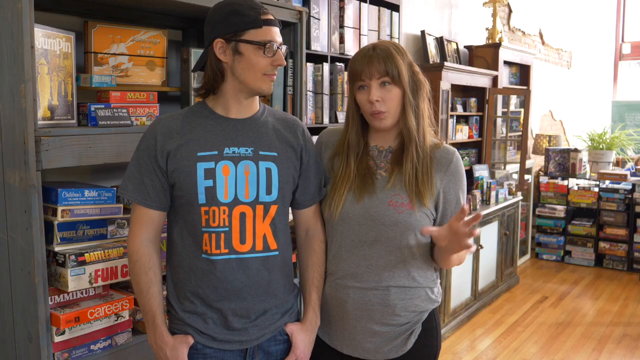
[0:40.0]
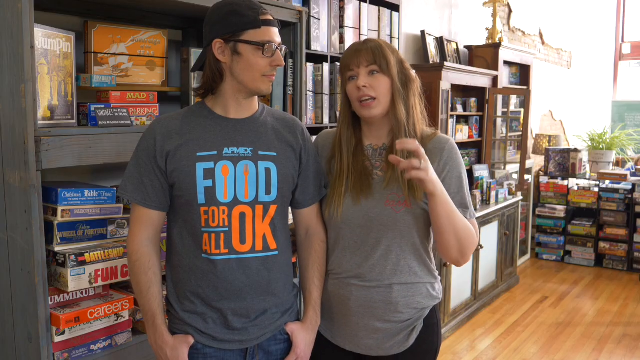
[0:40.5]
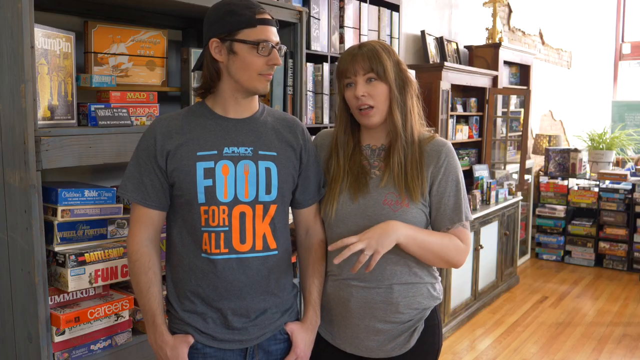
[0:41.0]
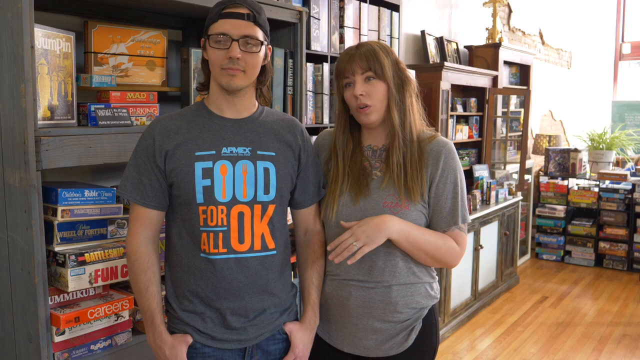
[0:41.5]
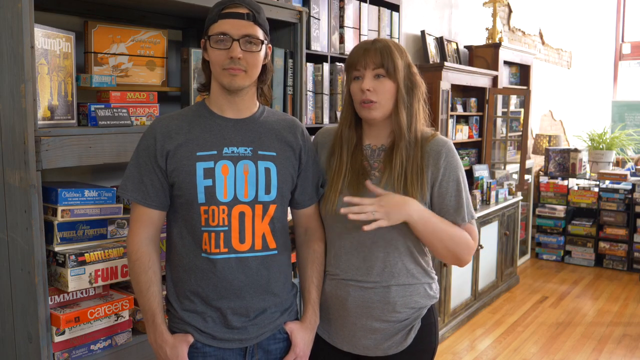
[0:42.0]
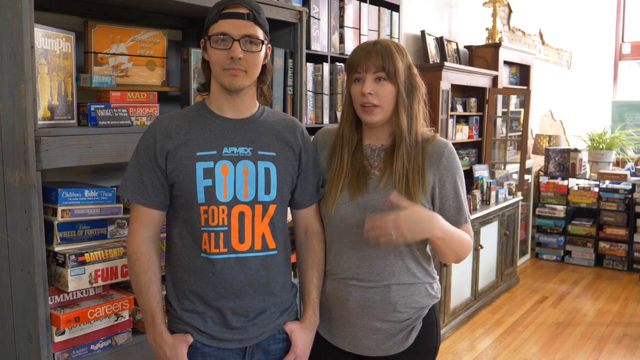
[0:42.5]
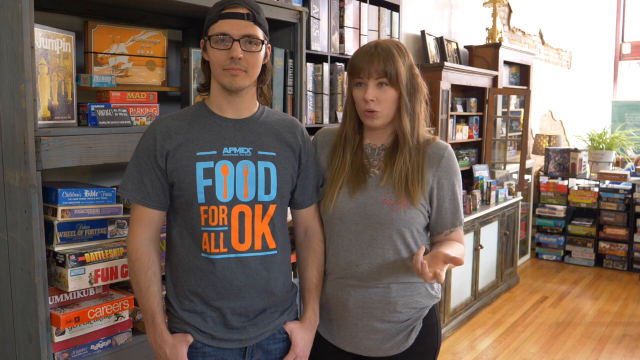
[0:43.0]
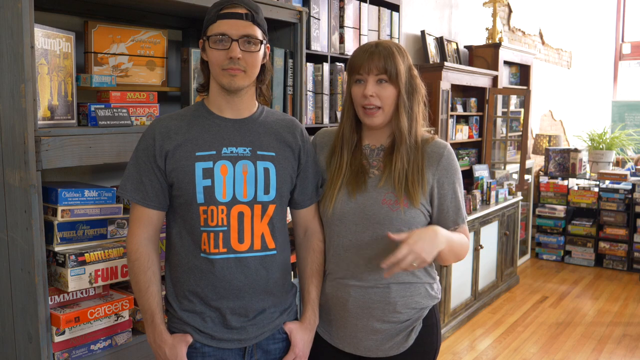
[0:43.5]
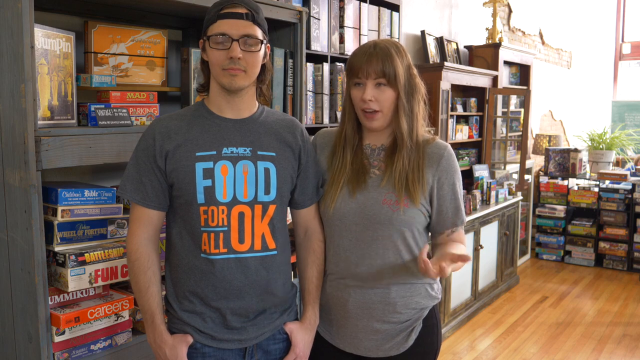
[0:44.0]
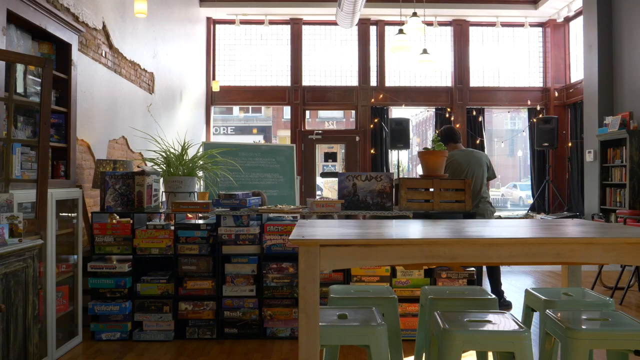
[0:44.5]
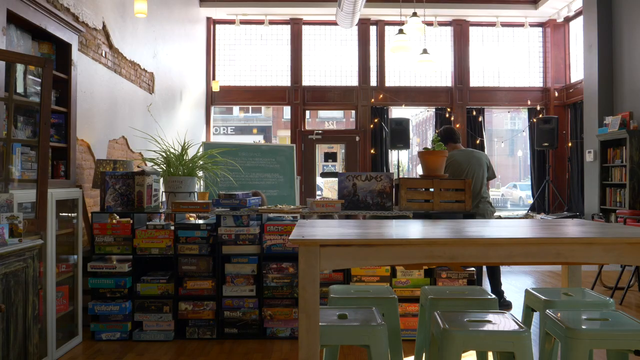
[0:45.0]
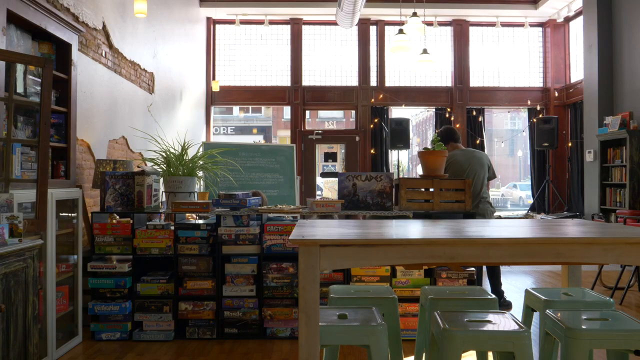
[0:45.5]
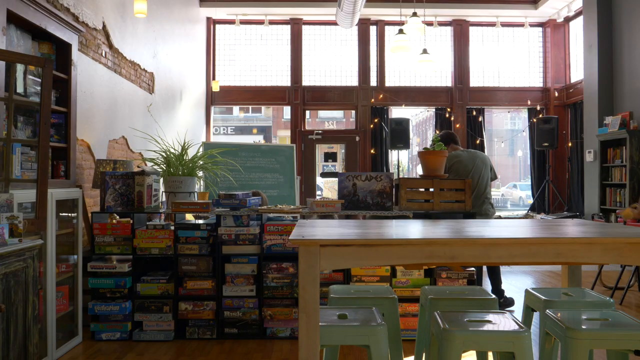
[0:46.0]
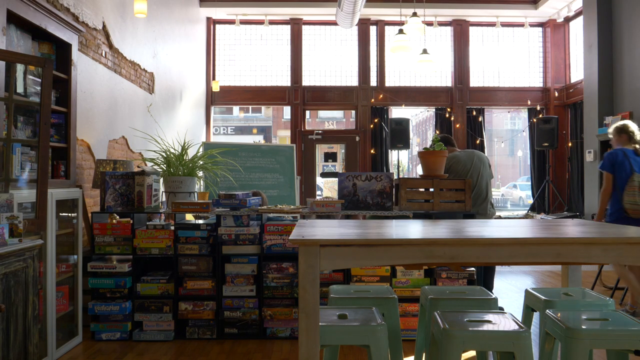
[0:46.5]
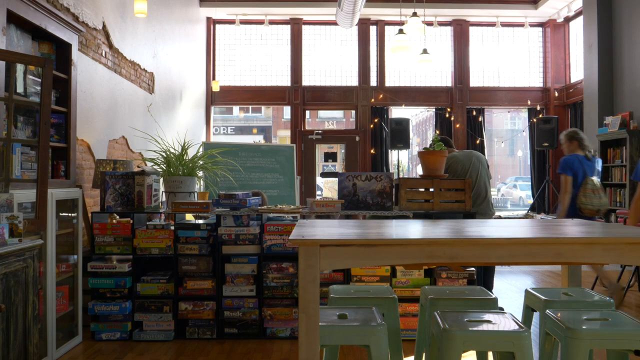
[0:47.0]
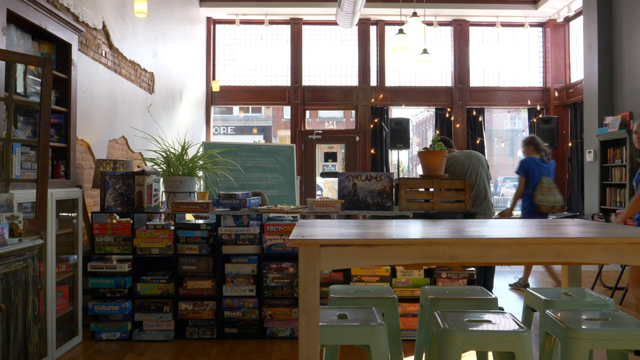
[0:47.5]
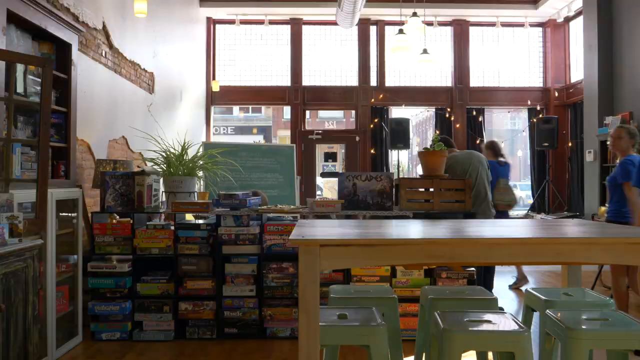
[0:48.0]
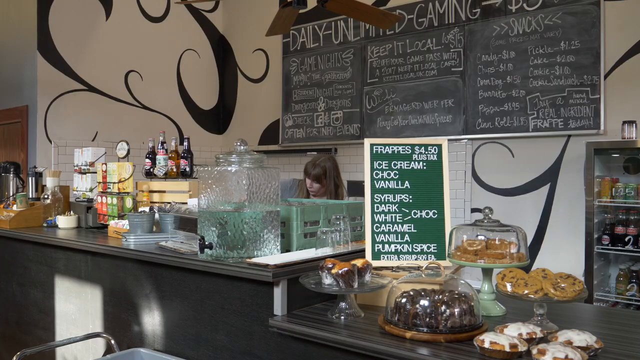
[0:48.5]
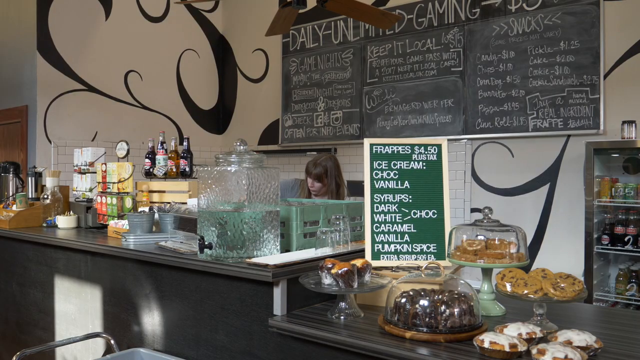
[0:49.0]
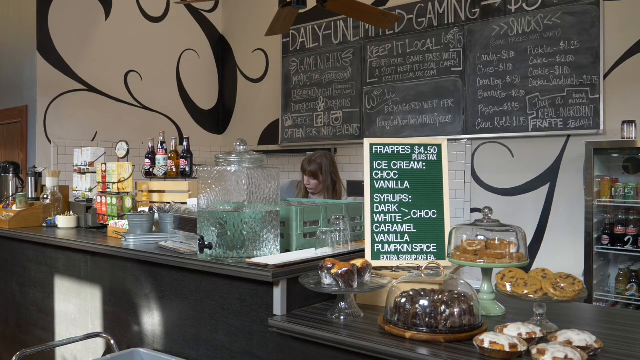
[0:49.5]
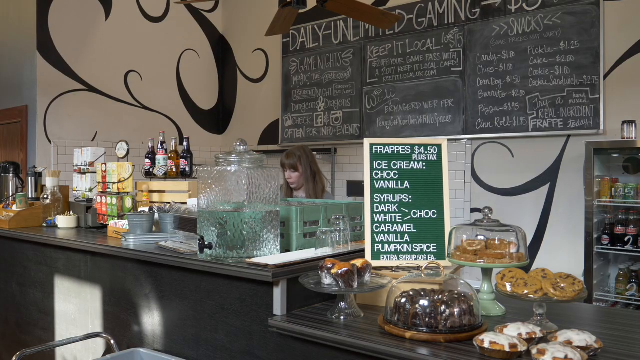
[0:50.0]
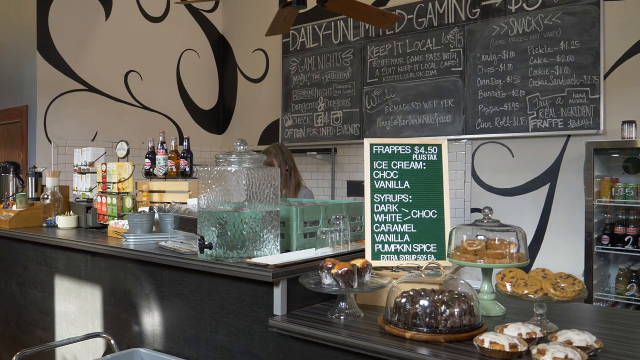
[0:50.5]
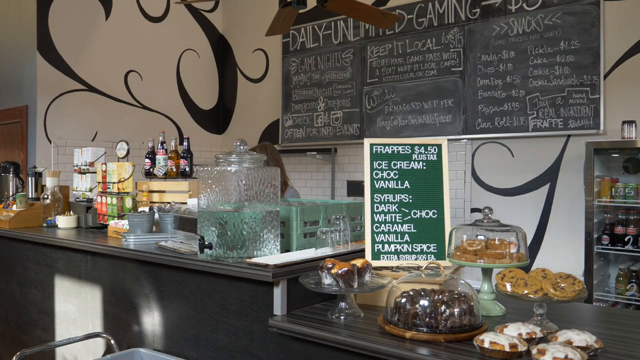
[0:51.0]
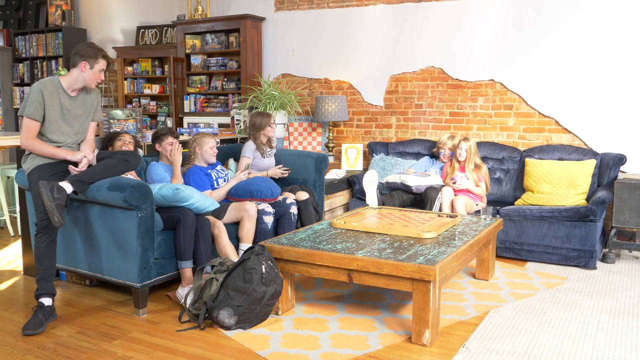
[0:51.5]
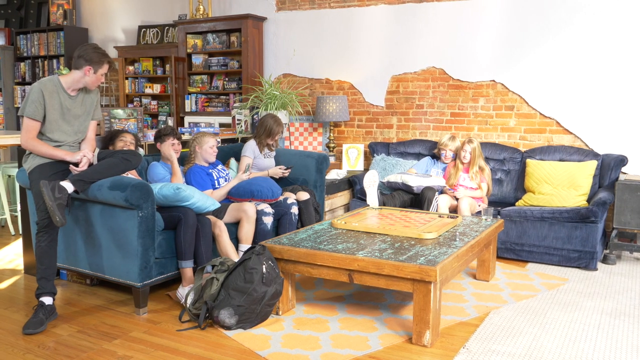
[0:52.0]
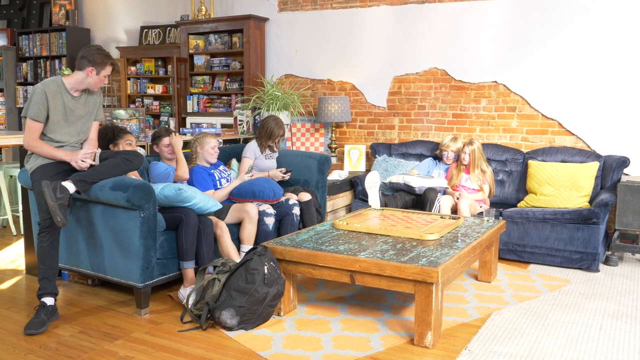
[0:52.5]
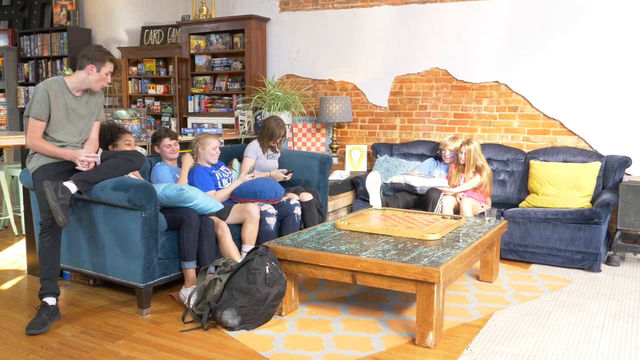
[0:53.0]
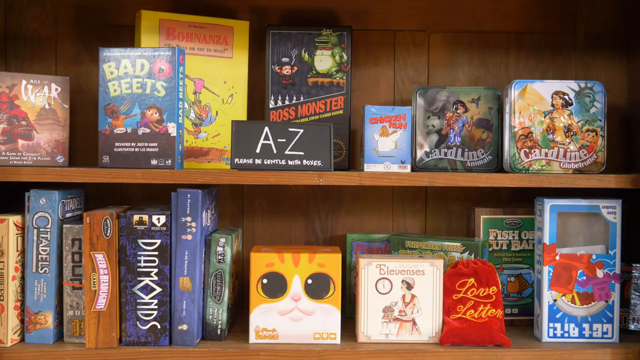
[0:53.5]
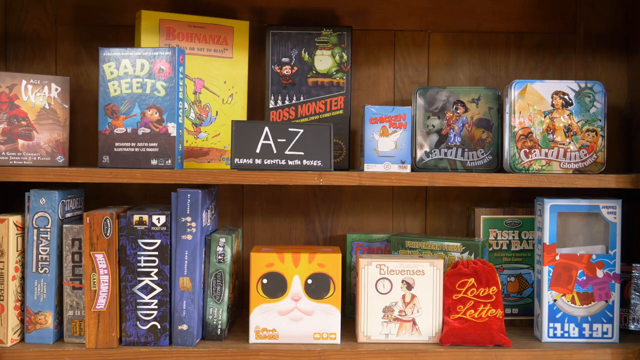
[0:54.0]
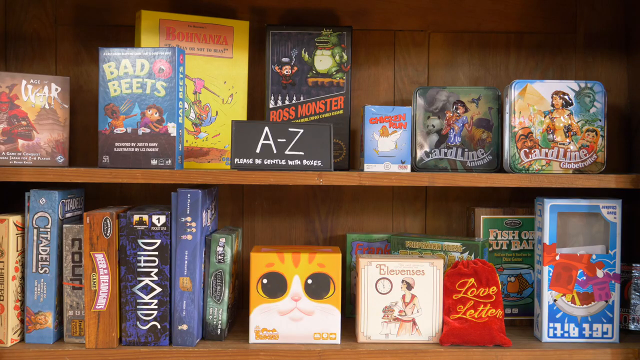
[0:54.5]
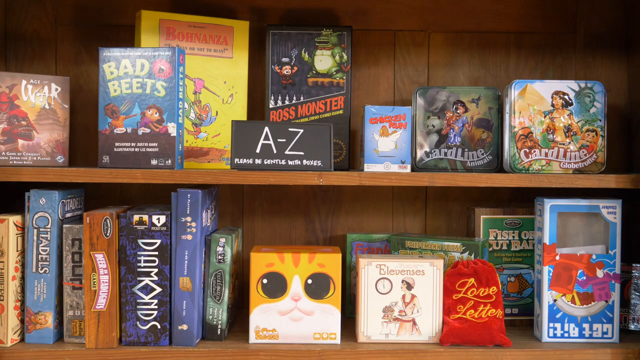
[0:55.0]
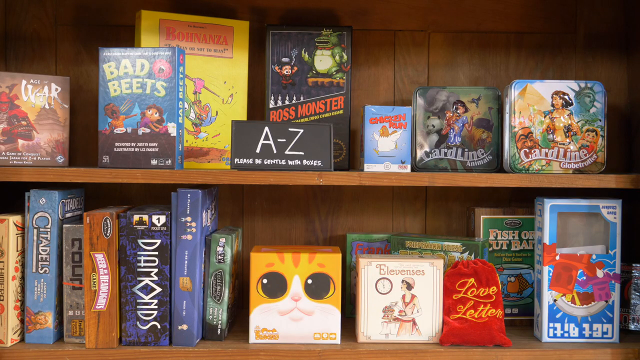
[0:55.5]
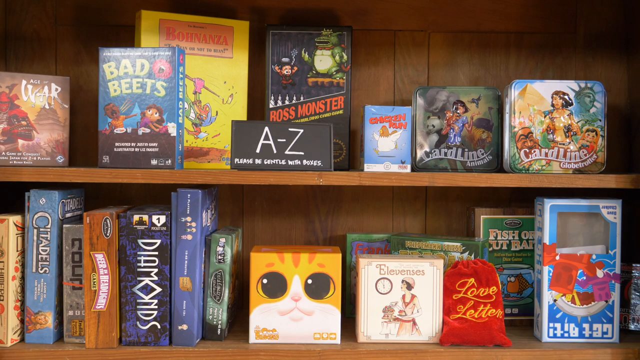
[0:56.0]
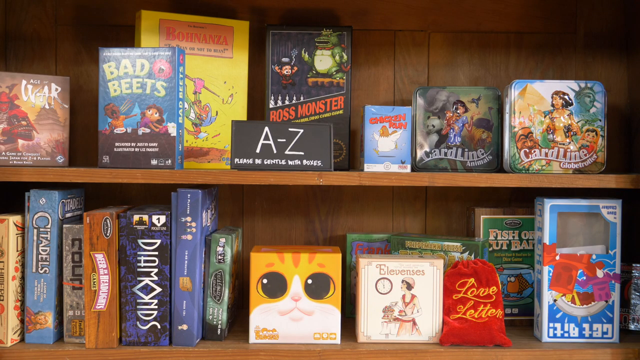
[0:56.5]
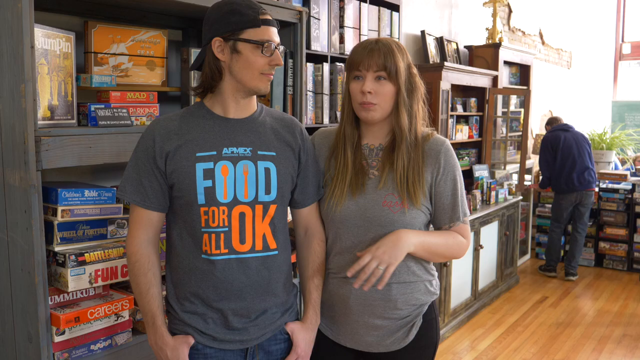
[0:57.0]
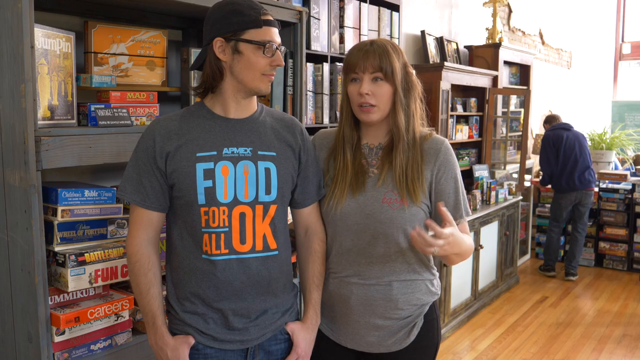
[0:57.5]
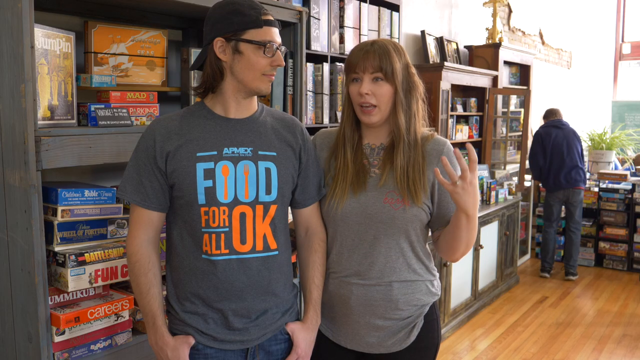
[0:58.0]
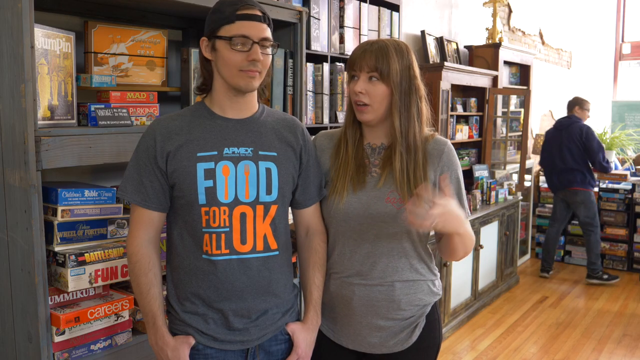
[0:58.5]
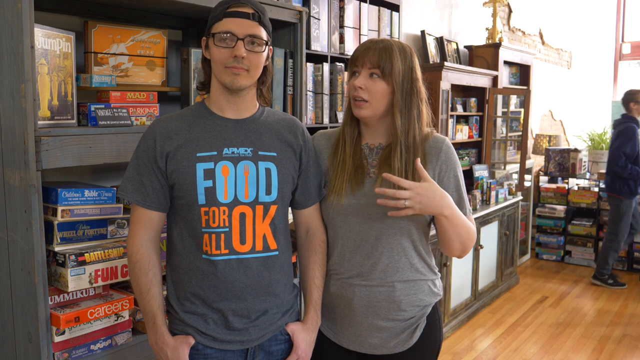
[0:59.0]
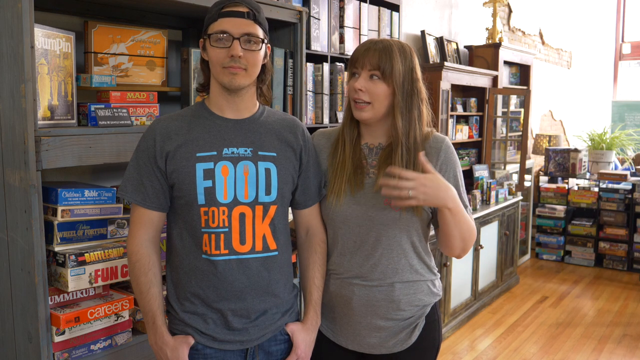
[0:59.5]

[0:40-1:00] The two people are speaking, with the woman on the right side of the screen gesturing with her left hand as she talks. The scene cuts to a wide view of the front entrance of the gaming house. A light brown table is on the right, and on the left a stack of board games on the floor stretches from the left to the right middle section of the floor. Large square windows are in the top portion of the screen, with the door and more rectangular windows below. On the right side, two women in blue t-shirts appear to be leaving the cafe, and a man in a light grayish shirt appears to be looking at something. Next is a cafeteria-type section with pastries, large cake displays with cookies and pastries, and a chalkboard listing items and their prices at the top of the screen, against a white wall with a design of black marks. The woman who was speaking with the owner is behind the register, tending to the cafeteria area. The scene then cuts to what appears to be the lounging area, where a group of people sit on two blue couches, one in the center and one to the left, having a conversation. The last scene shows a shelf with a collection of different items and games stacked neatly.